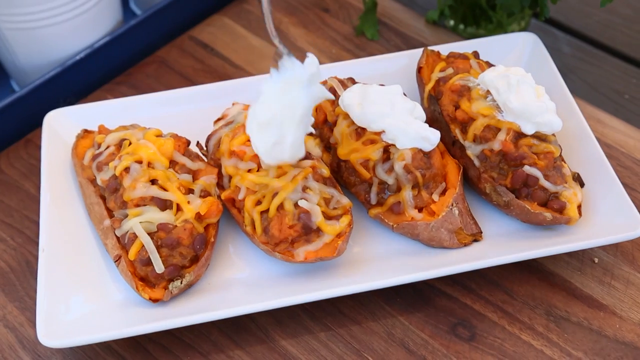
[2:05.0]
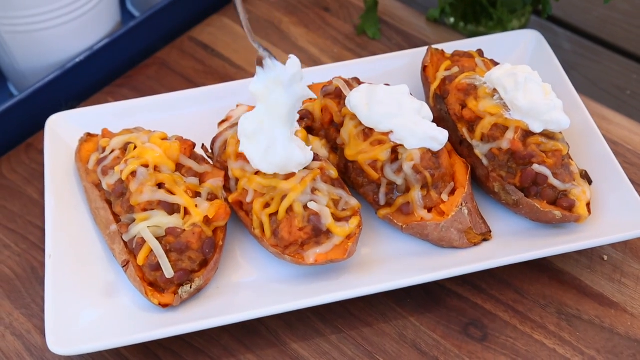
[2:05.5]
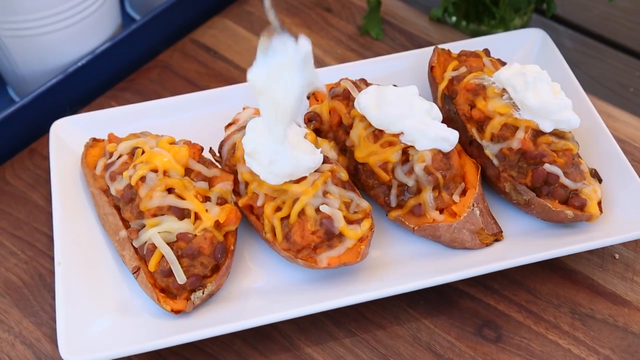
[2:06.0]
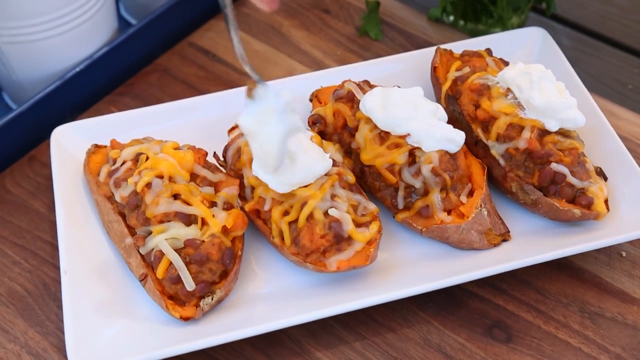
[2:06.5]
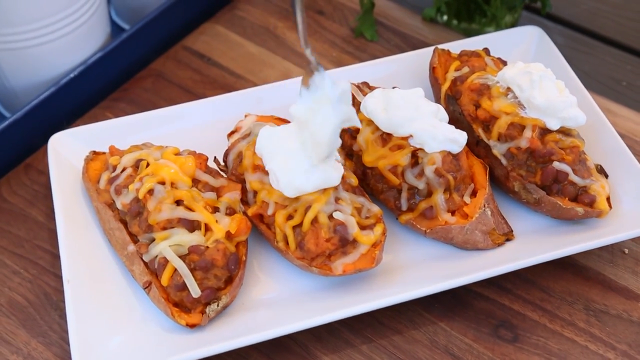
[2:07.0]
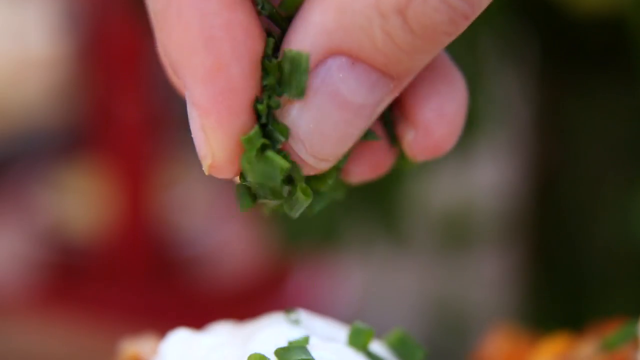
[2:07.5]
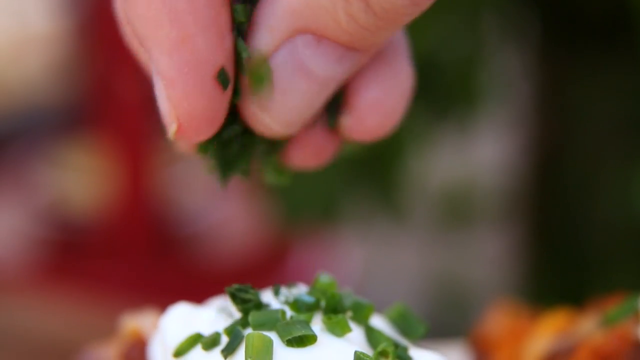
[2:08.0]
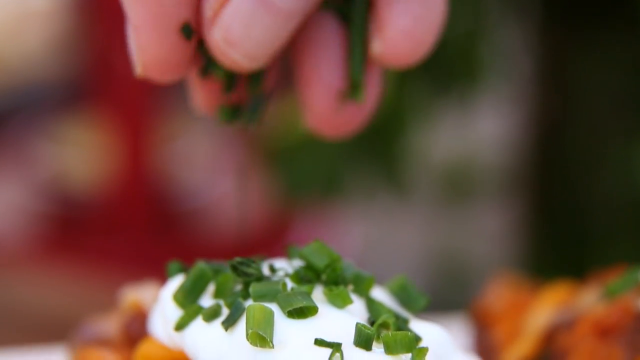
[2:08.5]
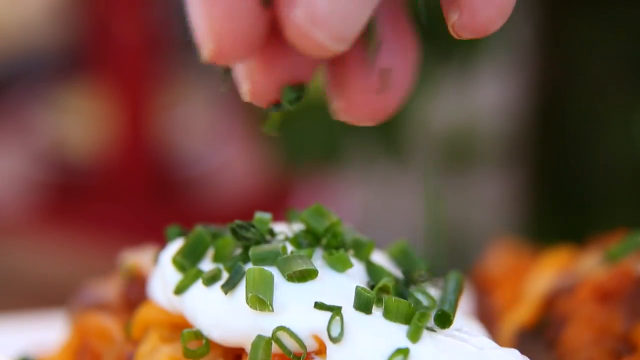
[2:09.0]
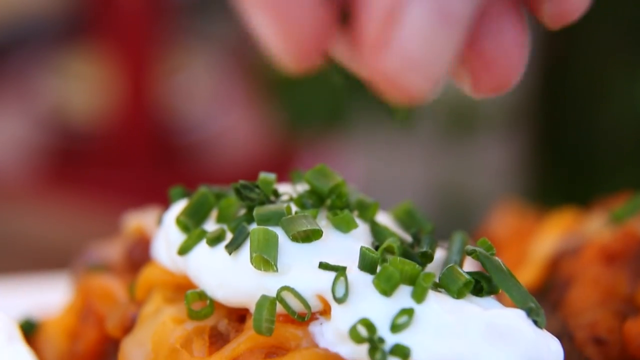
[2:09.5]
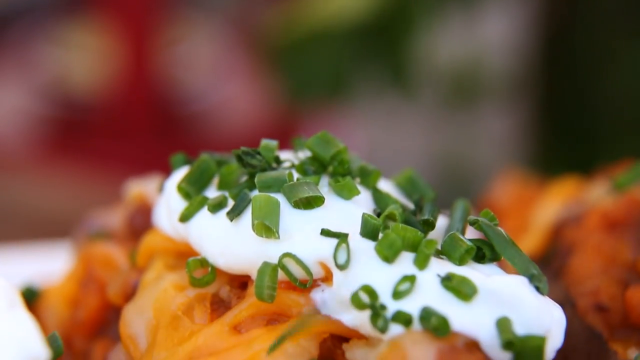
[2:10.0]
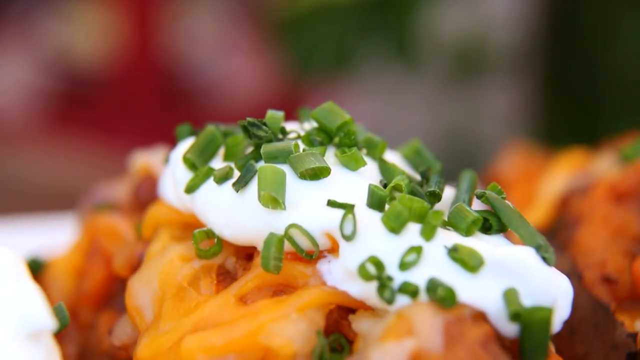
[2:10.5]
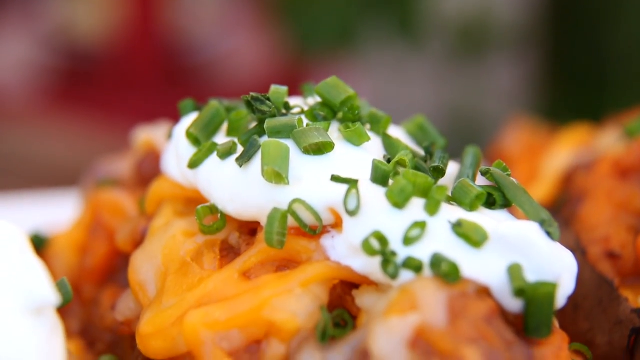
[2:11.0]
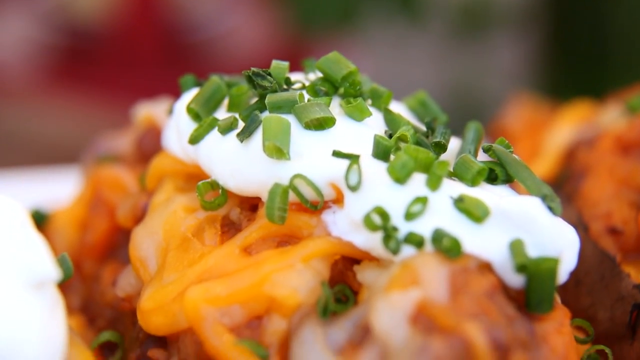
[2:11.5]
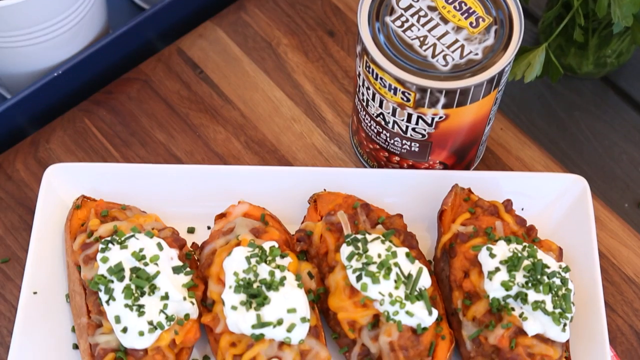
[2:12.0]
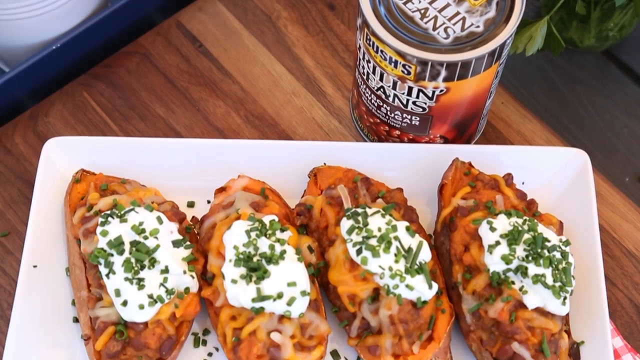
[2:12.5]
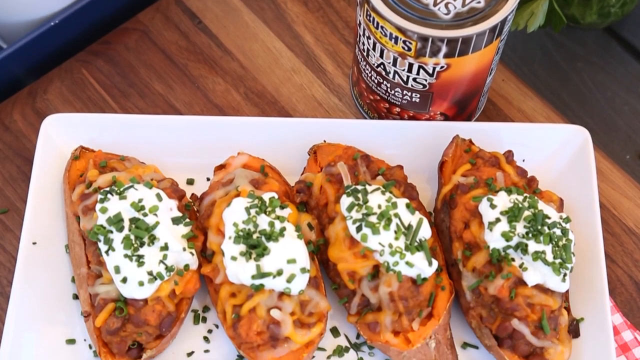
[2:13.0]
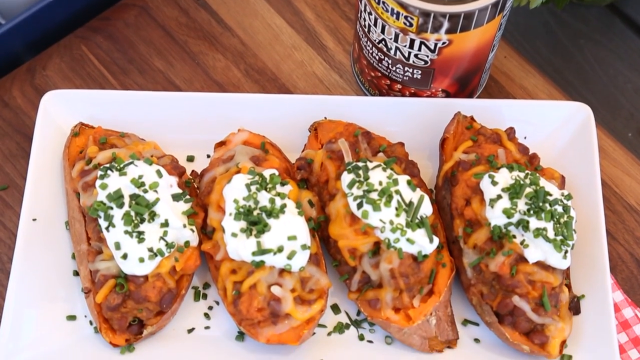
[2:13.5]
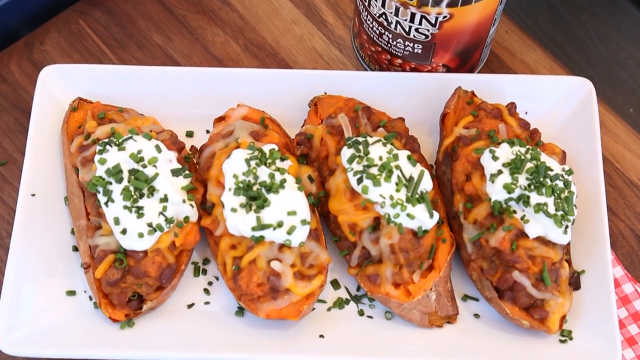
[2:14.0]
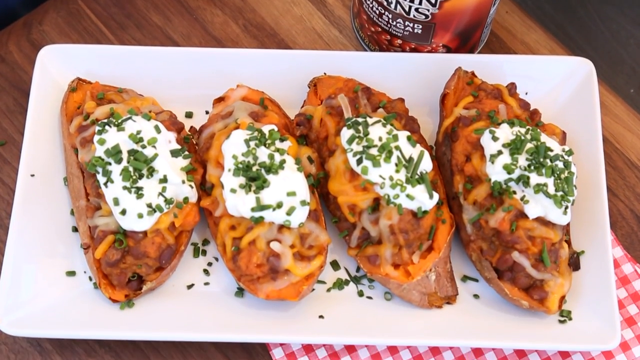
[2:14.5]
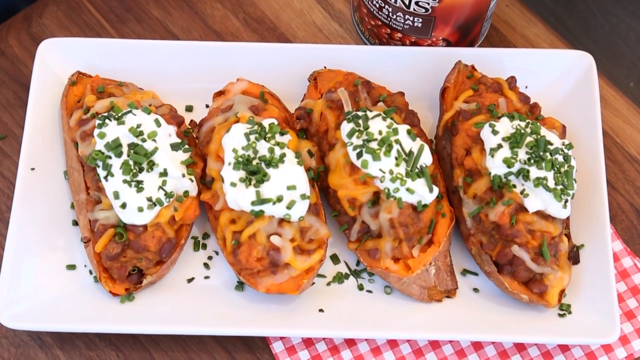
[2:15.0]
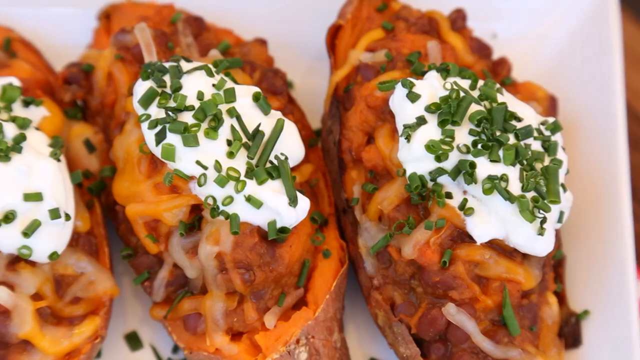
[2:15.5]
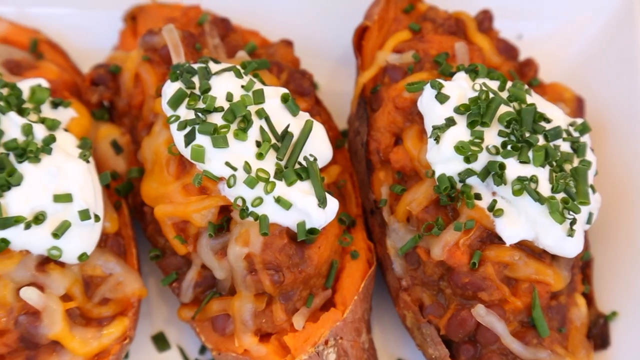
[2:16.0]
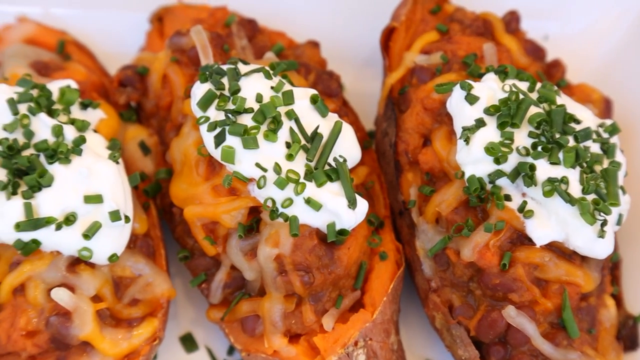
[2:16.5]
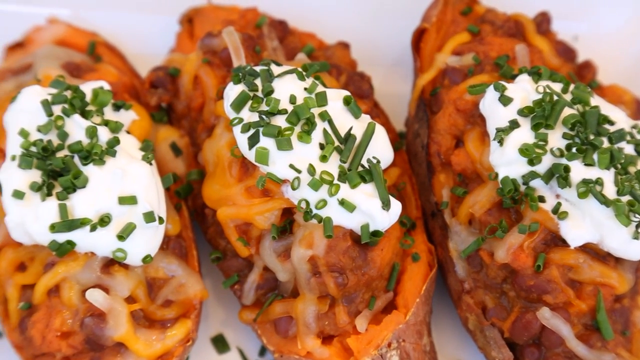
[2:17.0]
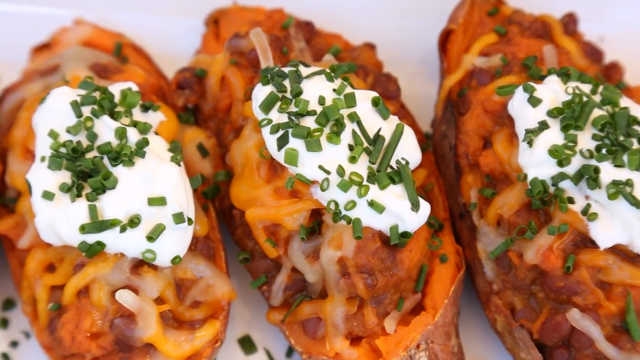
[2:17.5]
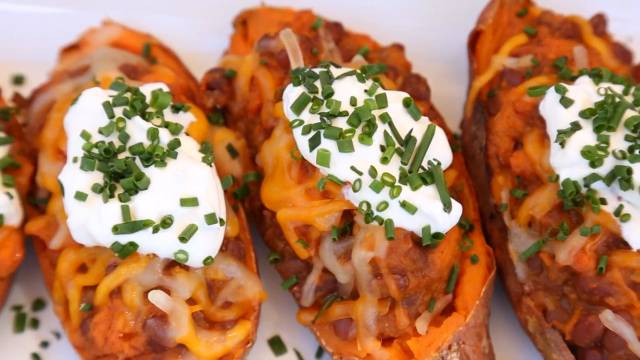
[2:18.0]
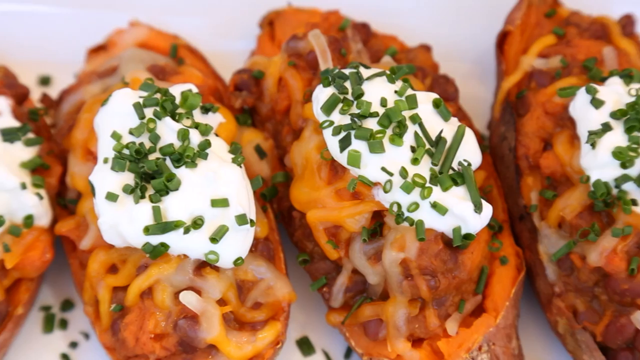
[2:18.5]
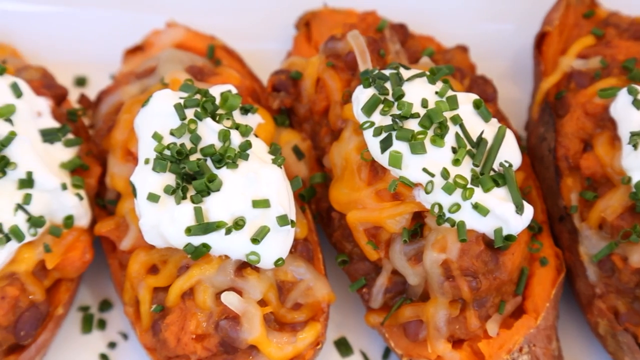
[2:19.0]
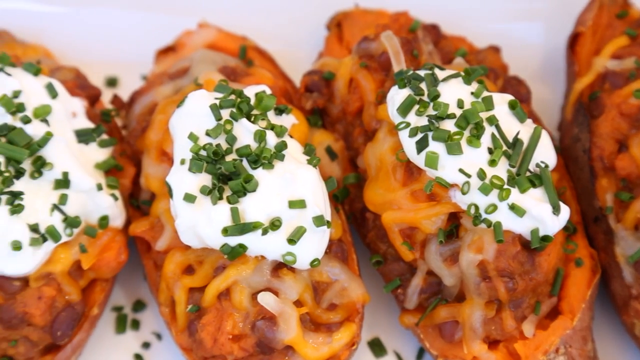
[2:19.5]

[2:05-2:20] On a white plate are the four cooked sweet potatoes with their cooked insides, and she appears to be putting some sort of white cream on top using a spoon; only three of the sweet potatoes are shown getting the cream. It cuts to a shot of her fingertips holding some sort of small herb, which she appears to sprinkle on top of the white cream. After a close-up, an overhead shot shows a can of beans on a wooden brown table and a white rectangular plate with four completely cooked sweet potatoes, all topped with the white cream and green herbs. Some green herbs have fallen to the bottom of the plate. Then a close-up moves across all the sweet potatoes from right to left. In the background are the same green plants and a wooden floor, showing a patio of some sort. In some scenes the background is completely blurred.